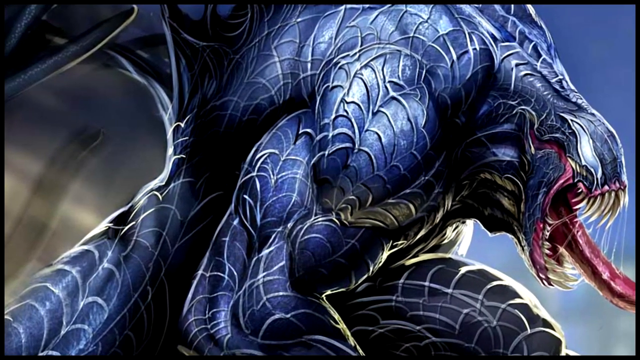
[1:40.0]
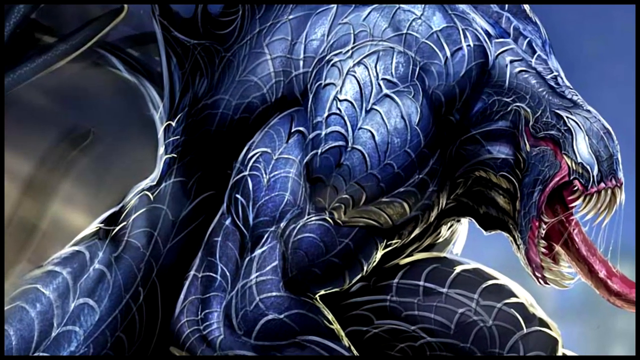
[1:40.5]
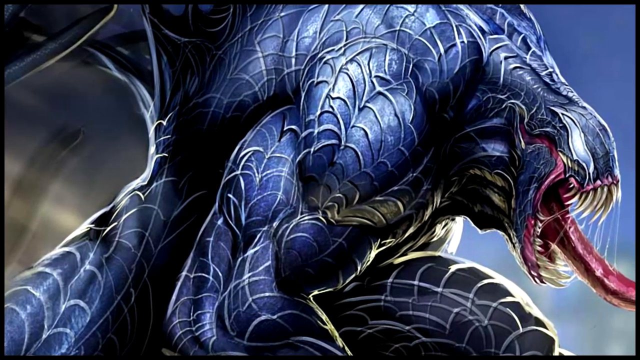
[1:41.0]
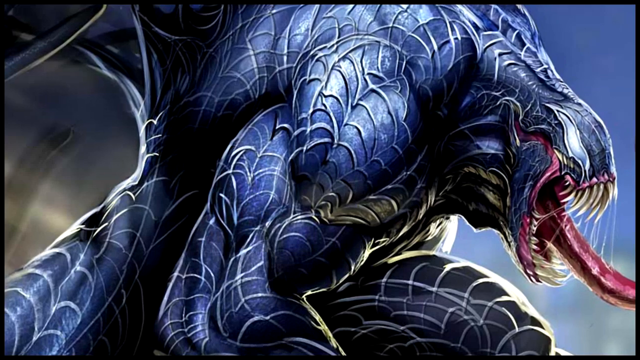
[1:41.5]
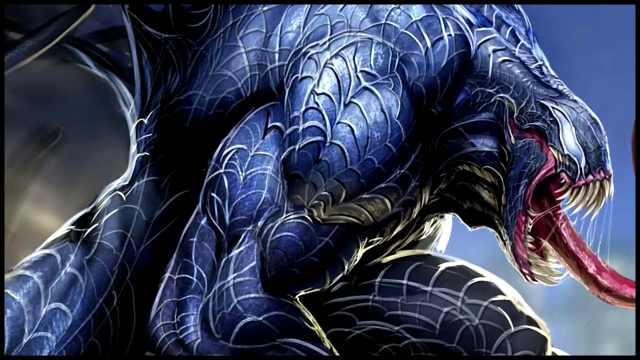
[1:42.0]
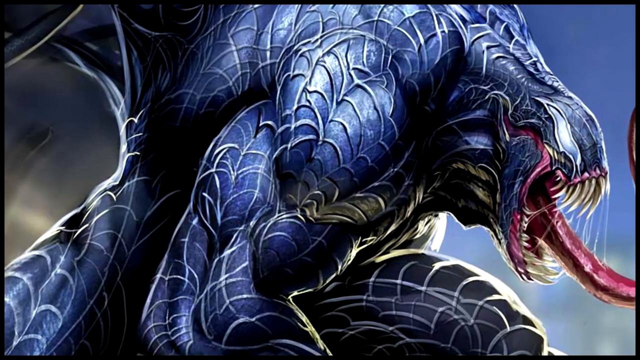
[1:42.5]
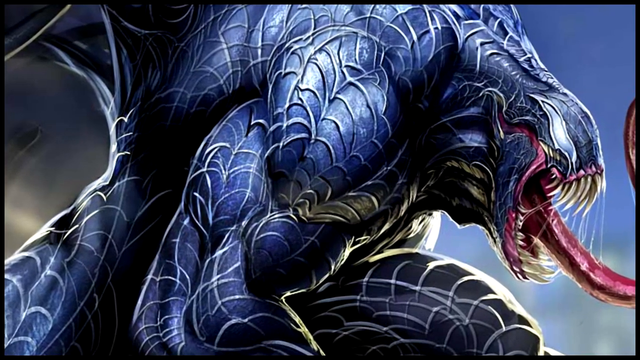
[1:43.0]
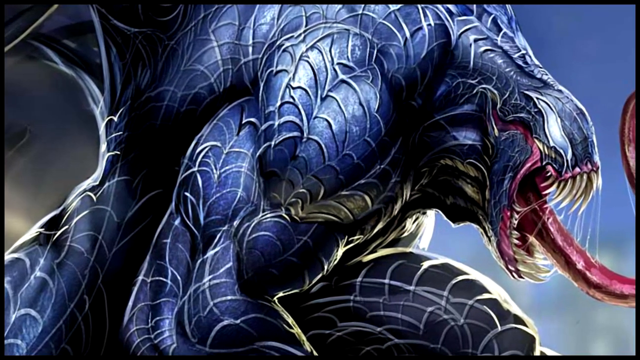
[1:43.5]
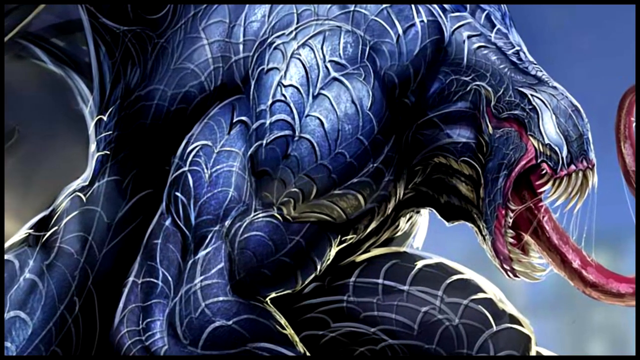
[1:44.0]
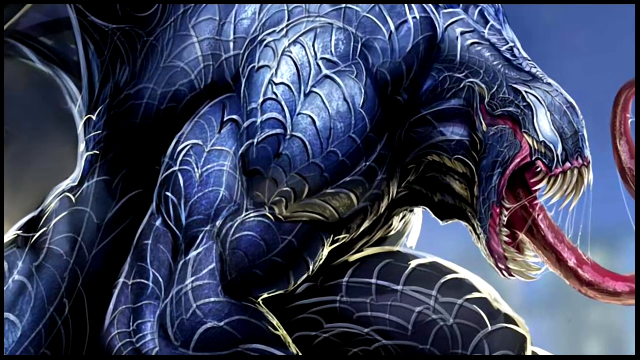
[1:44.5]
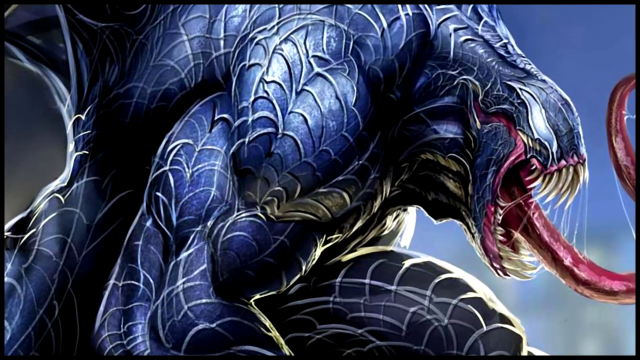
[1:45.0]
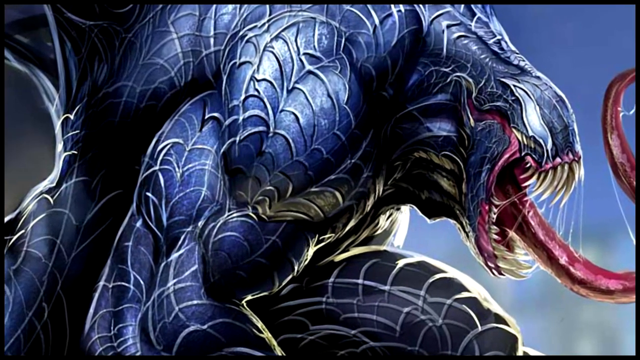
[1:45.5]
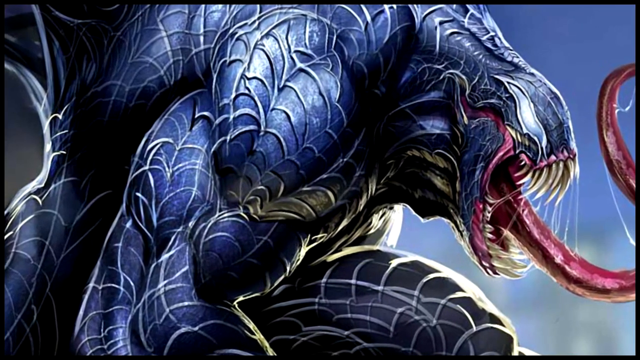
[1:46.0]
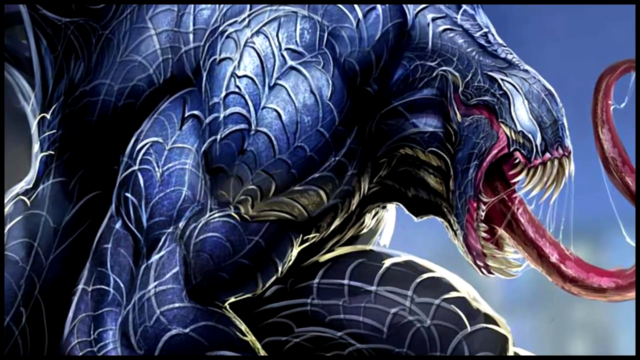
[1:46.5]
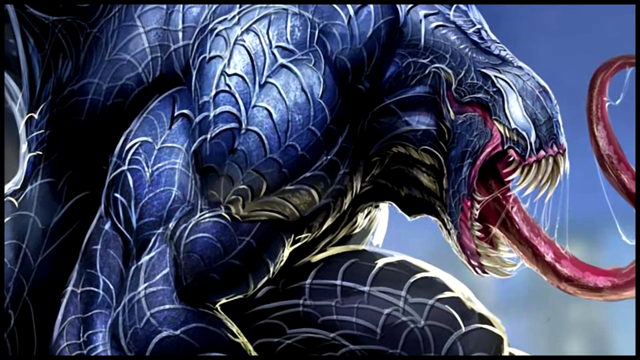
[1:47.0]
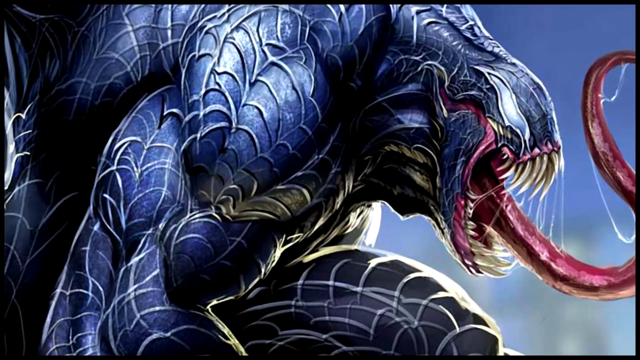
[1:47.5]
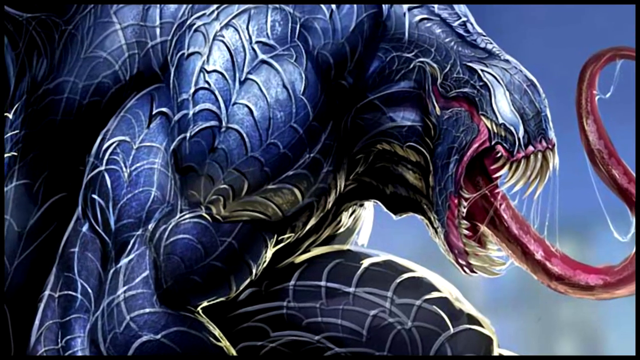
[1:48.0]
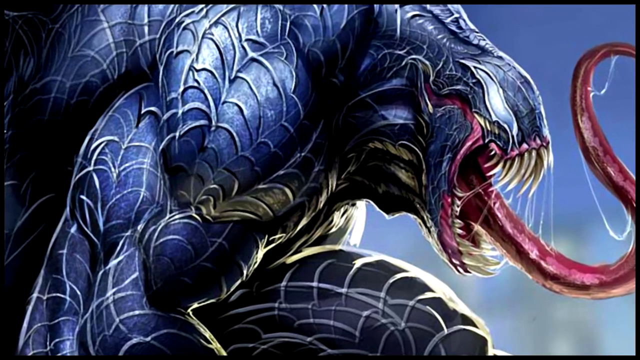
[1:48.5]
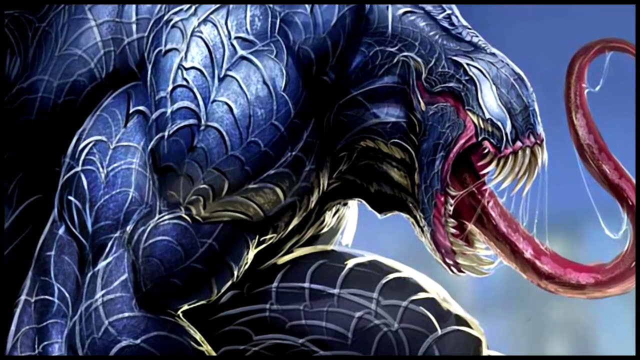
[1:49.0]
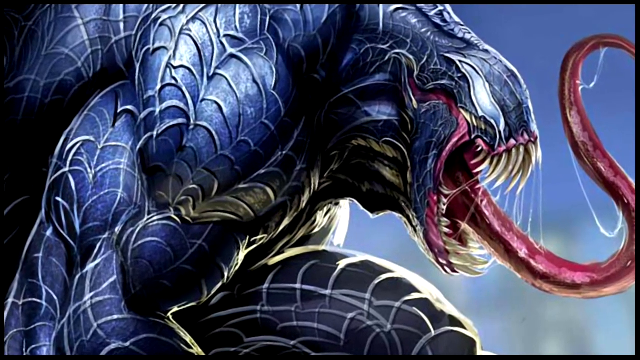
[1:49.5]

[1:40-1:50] The view slowly moves and zooms in on the right front part of the picture, so the creature is seen from its right side, with its head and tongue on the far left of the frame, zooming in on the head at an angle. Here the creature is dark blue with shades and patches of black, lighter blue and even slightly white patches. Muscles and veins are shown on its body as lines lighter than the blue, and the whole body is covered in these veiny muscular lines. The neck is incredibly thick, like that of a rugby player. The eyes are silver slits, though only the right eye is visible. The mouth is open, with the same long, light yellowish razor teeth, the tongue sticking out and spittle attached to the teeth and tongue. The view slowly rounds the image to the left, bringing into view the whole tongue, elaborately shaped in an S with spittle attached.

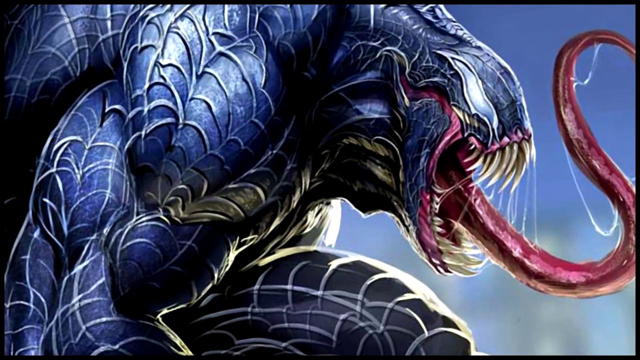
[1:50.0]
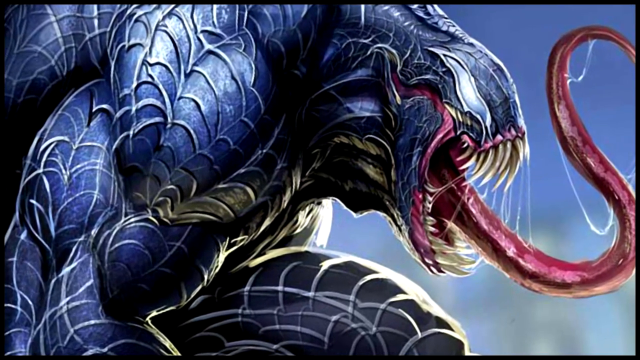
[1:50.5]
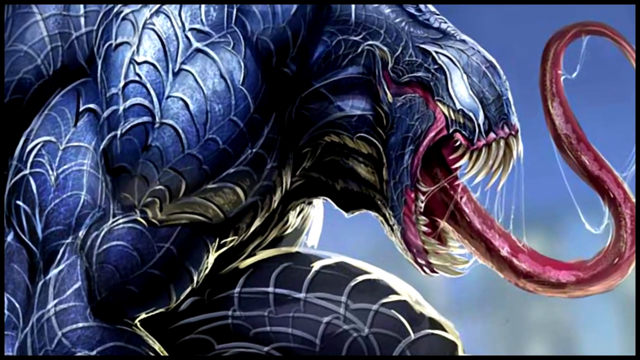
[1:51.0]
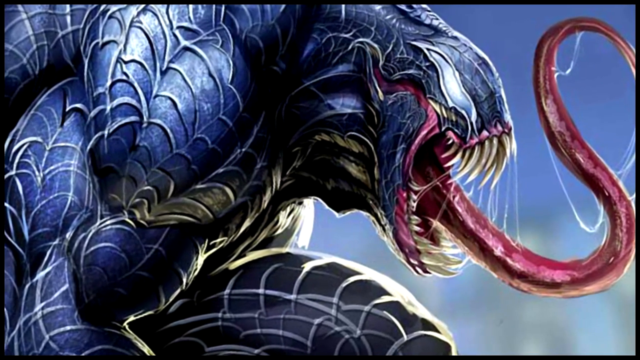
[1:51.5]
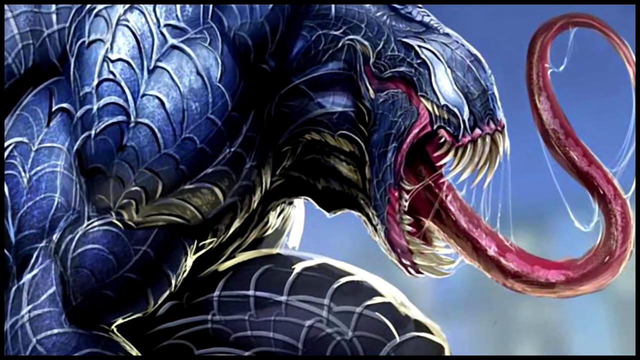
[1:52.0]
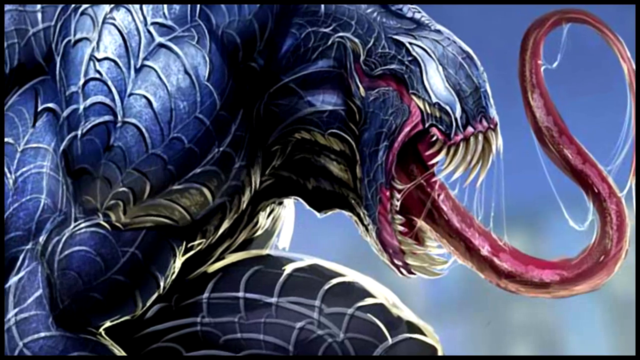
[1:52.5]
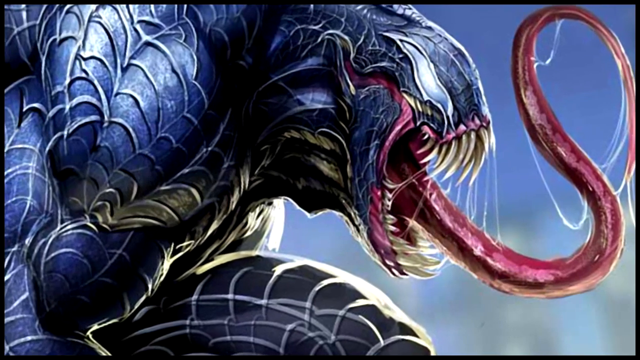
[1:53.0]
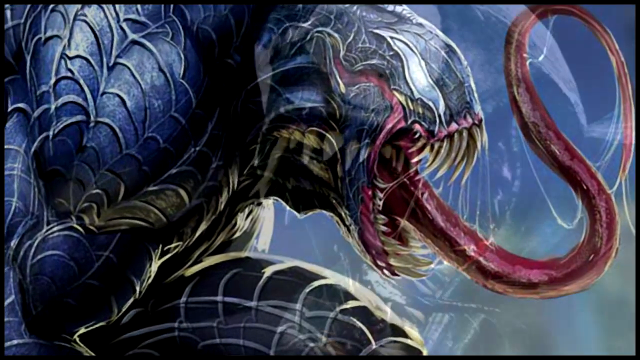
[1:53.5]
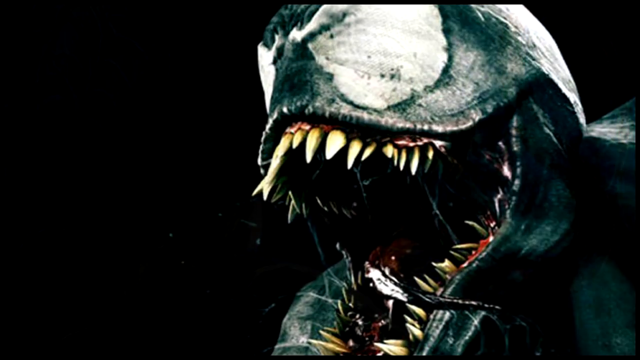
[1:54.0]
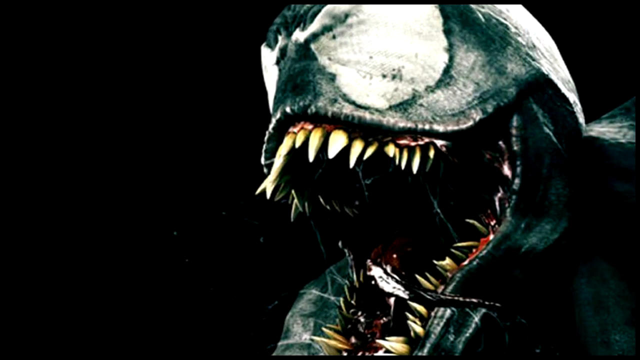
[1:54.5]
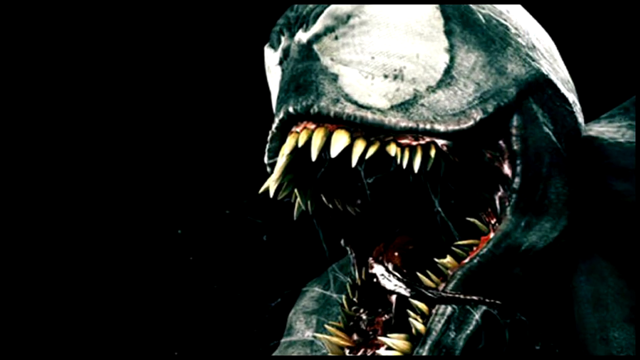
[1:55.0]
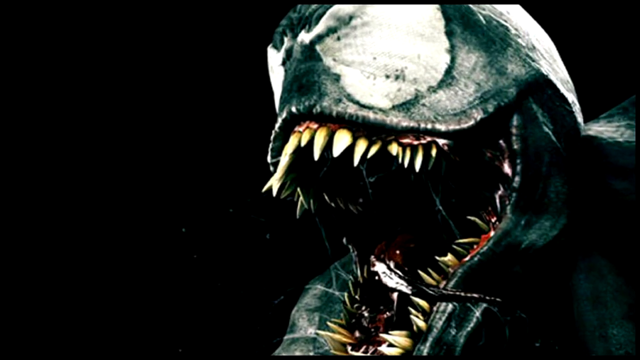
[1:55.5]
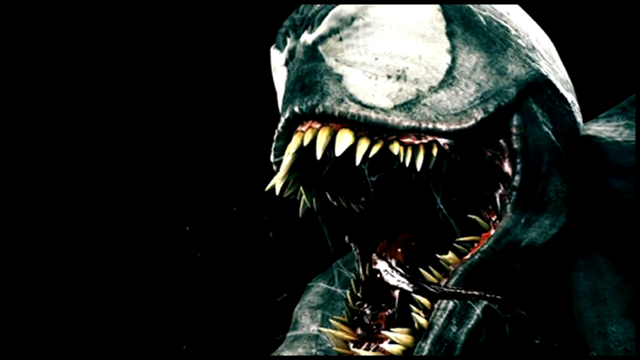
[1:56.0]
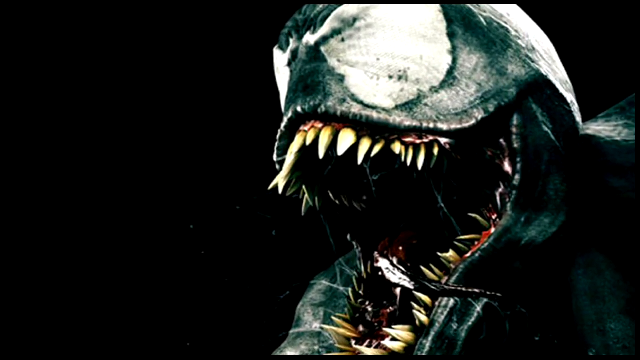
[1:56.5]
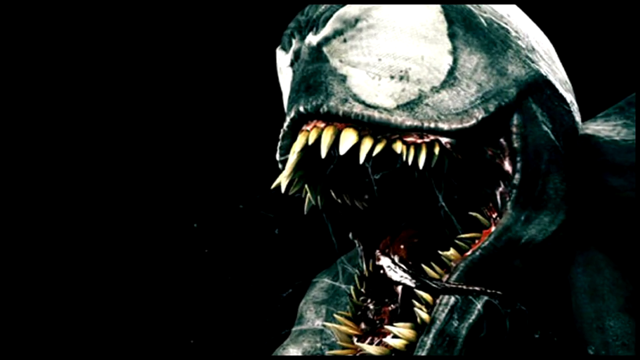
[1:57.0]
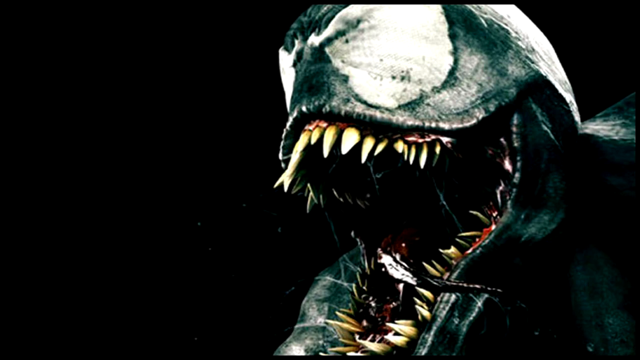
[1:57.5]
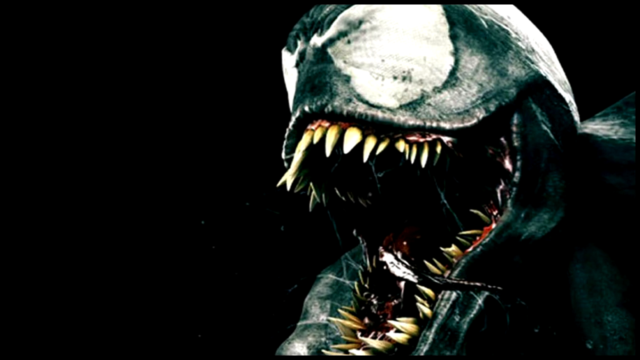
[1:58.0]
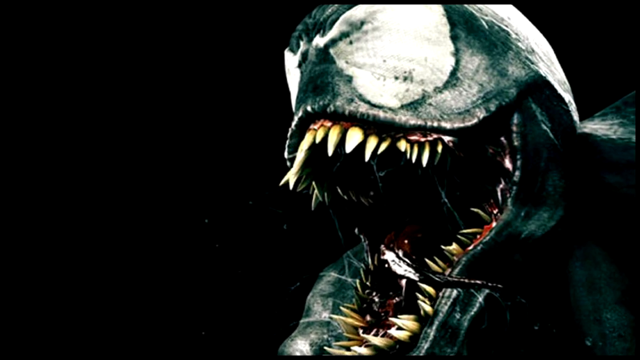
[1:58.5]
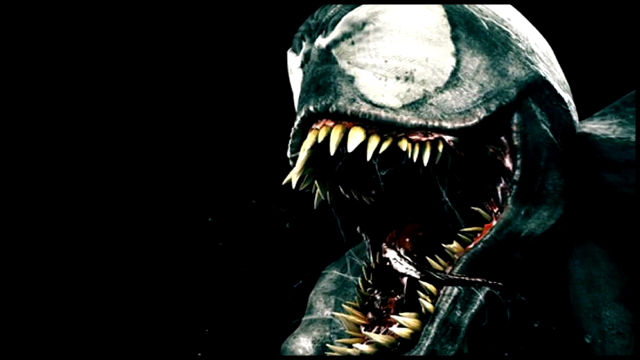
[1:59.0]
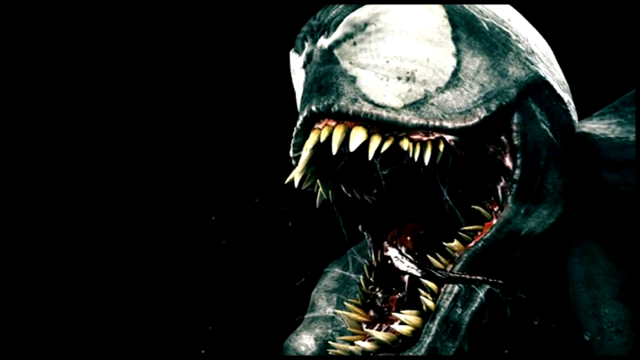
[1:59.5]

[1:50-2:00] The camera keeps zooming into the Venom creature's head at a rounded angle, then cuts to a black background with an illustrated, possibly hand-drawn Venom head taking up a little more than the right half of the frame. This one is a more greenish-grey colour, and the inside of the mouth is black, like a chasm. The creature looks haggard. The bottom teeth are very broken: some have broken off in half and at an angle, and some look as if they have been torn from the gums.